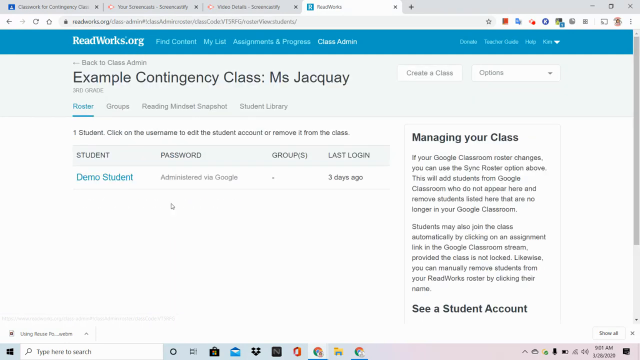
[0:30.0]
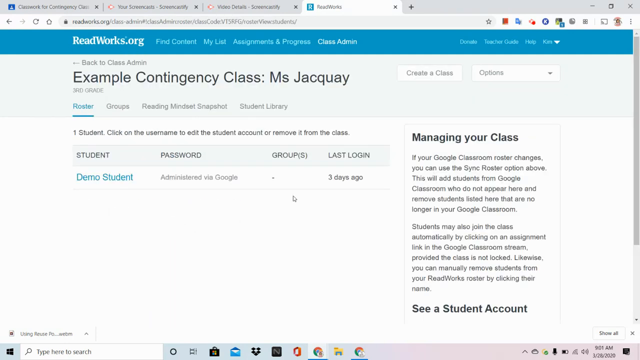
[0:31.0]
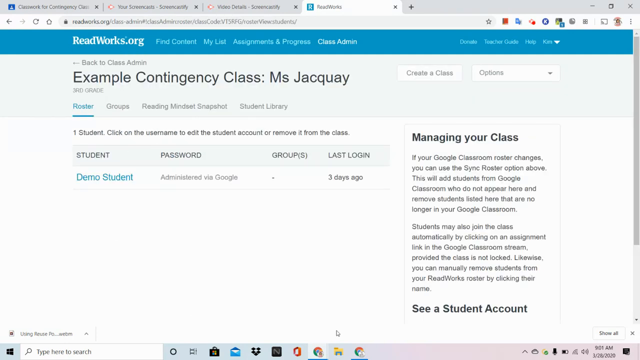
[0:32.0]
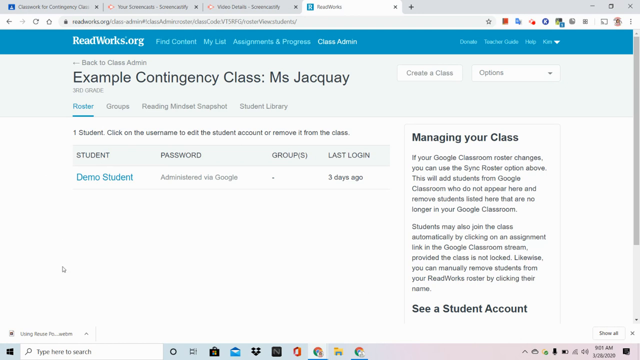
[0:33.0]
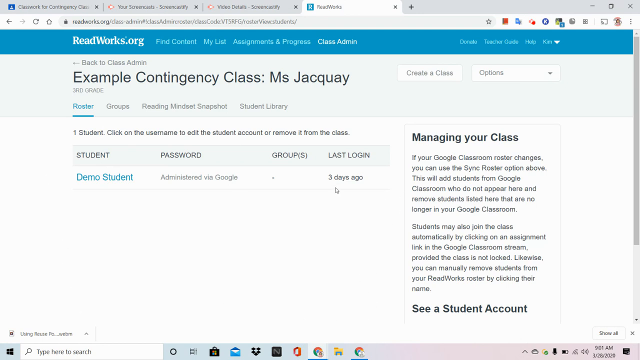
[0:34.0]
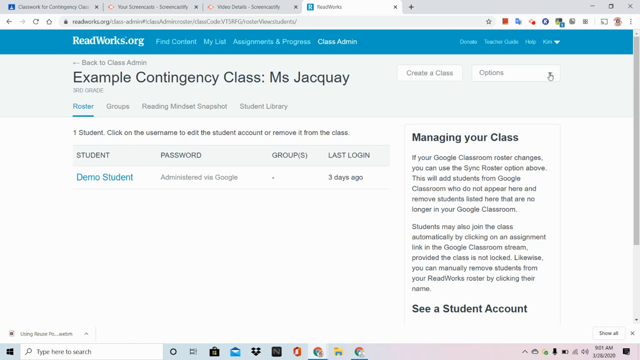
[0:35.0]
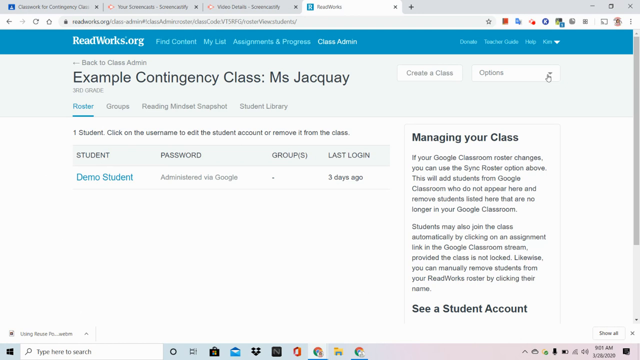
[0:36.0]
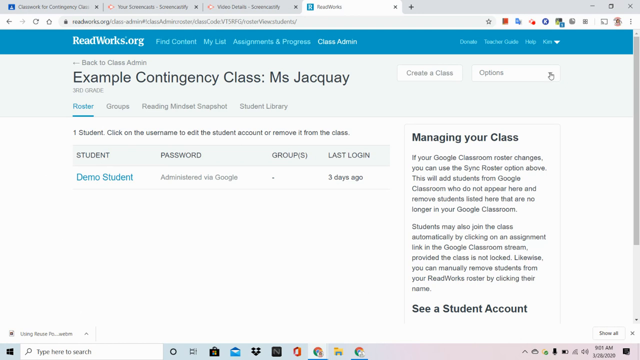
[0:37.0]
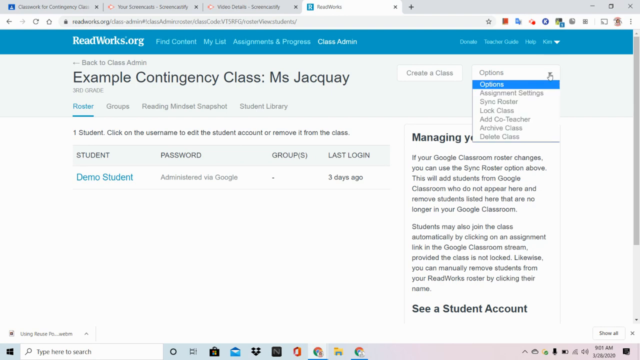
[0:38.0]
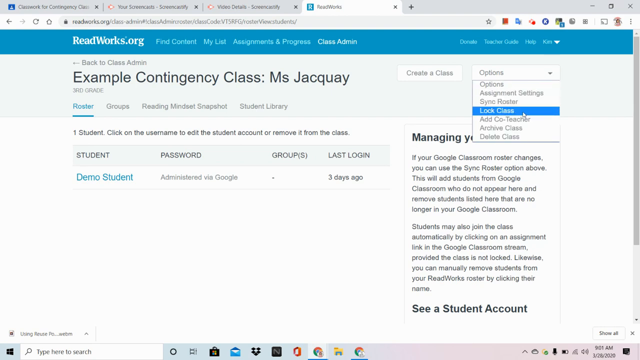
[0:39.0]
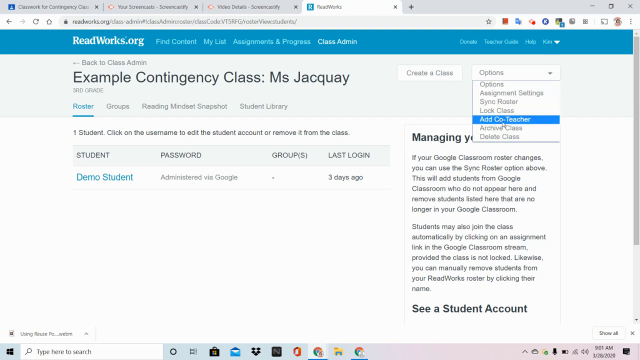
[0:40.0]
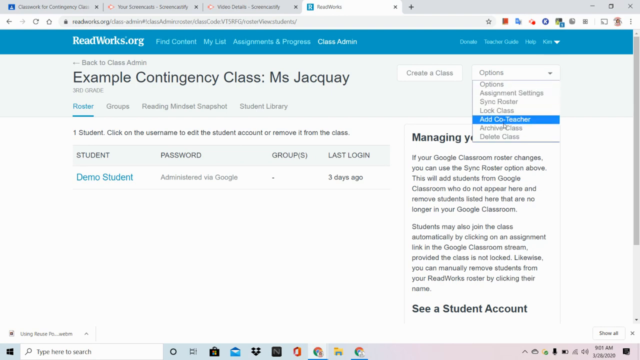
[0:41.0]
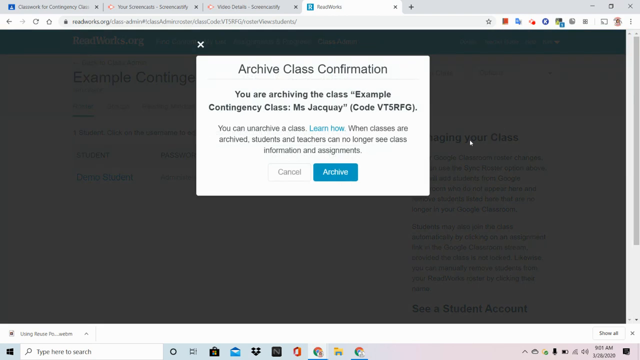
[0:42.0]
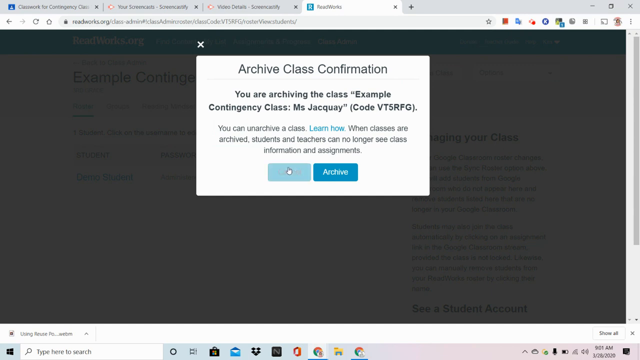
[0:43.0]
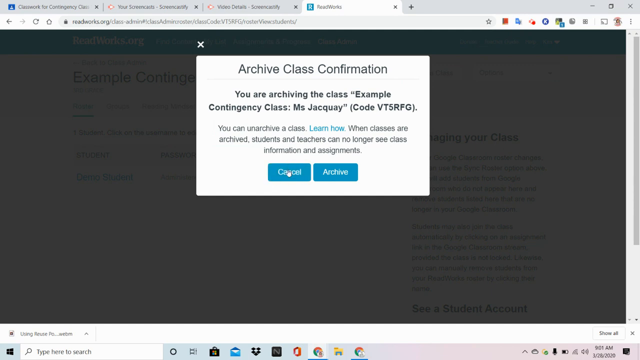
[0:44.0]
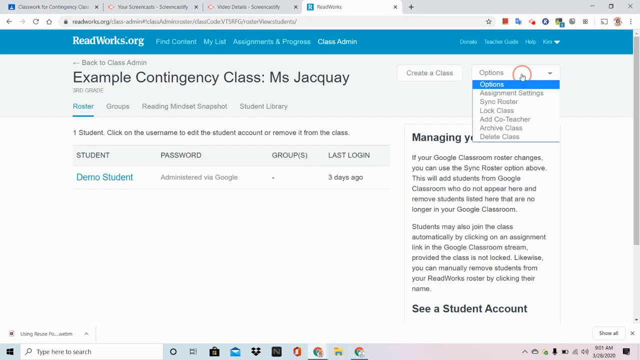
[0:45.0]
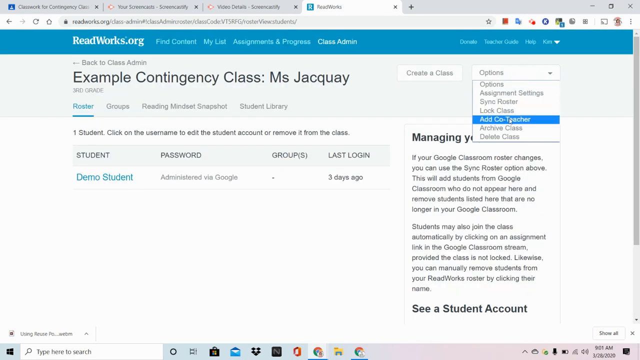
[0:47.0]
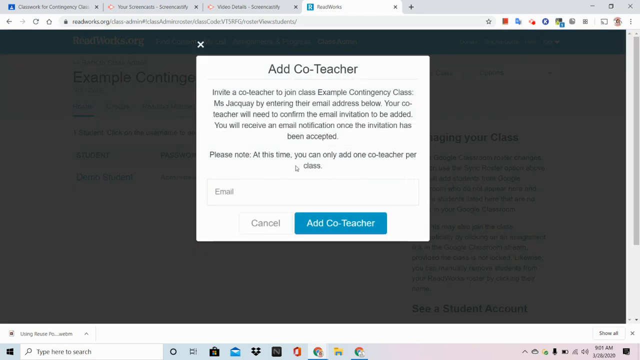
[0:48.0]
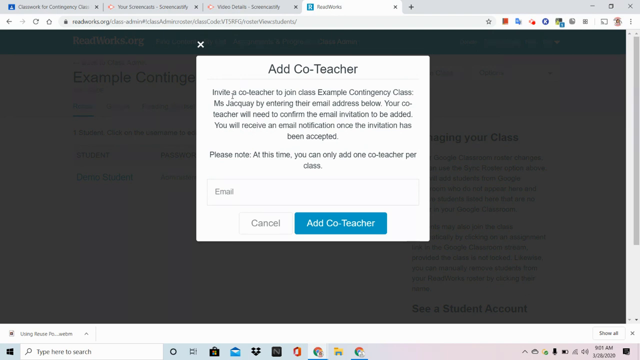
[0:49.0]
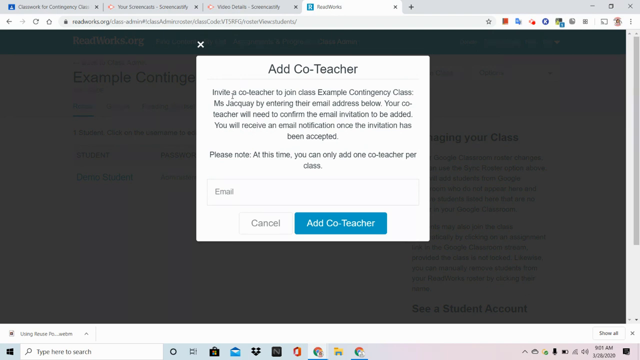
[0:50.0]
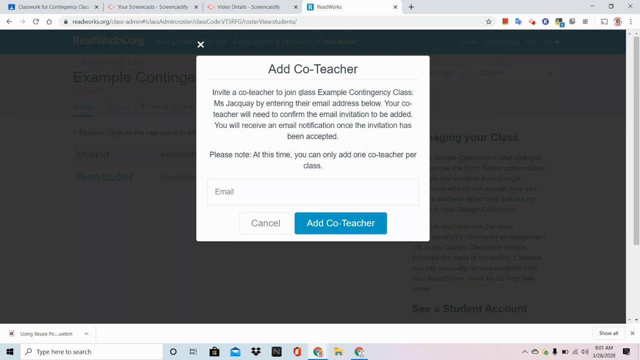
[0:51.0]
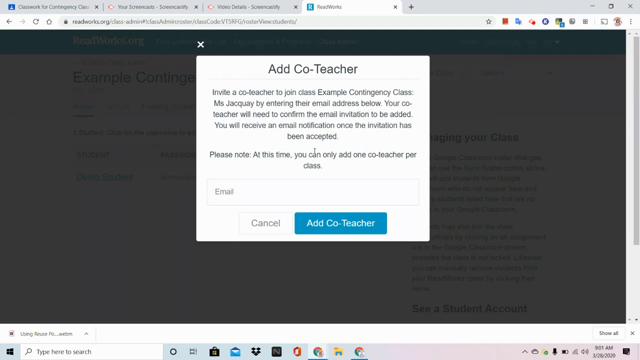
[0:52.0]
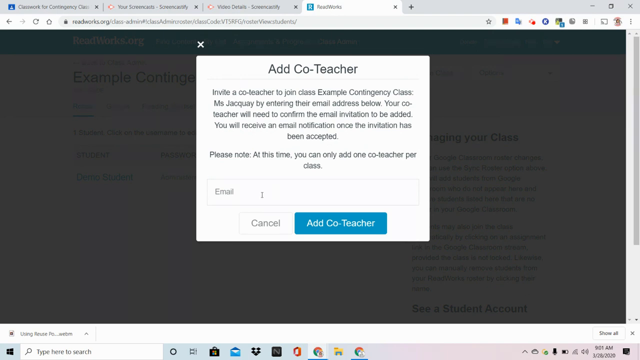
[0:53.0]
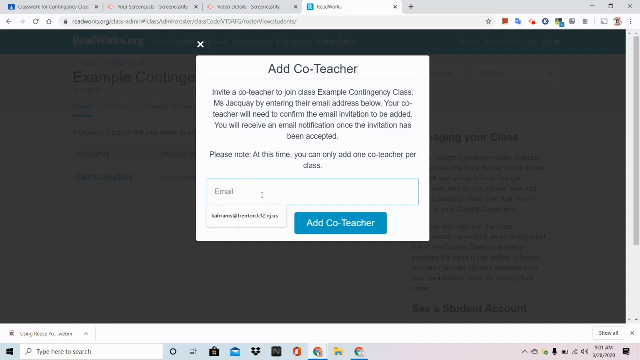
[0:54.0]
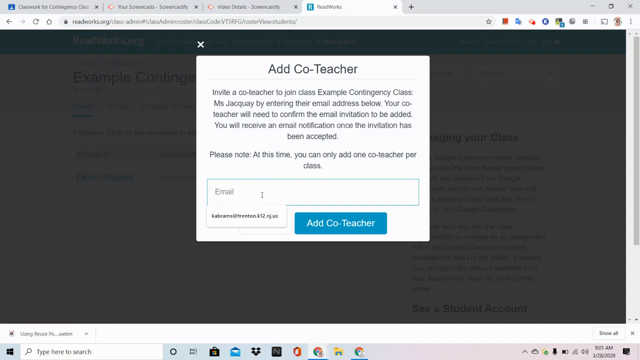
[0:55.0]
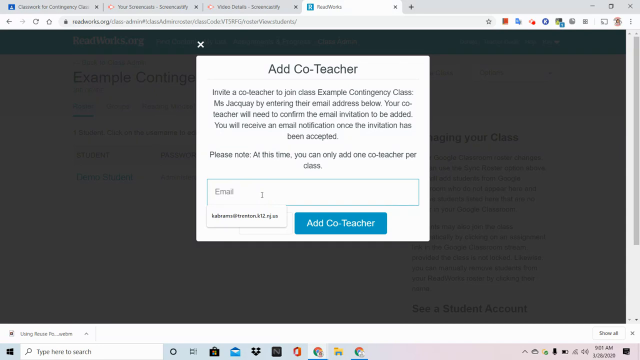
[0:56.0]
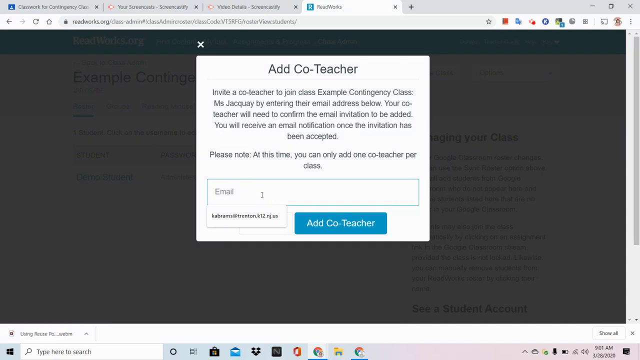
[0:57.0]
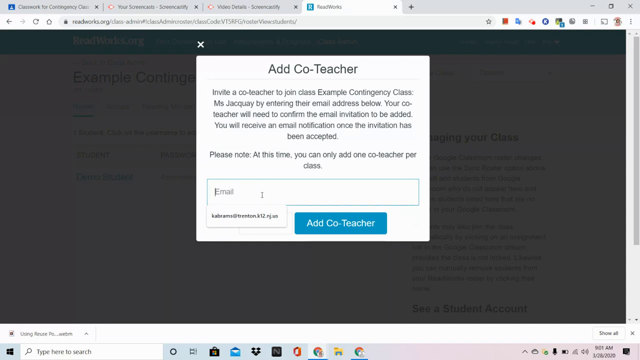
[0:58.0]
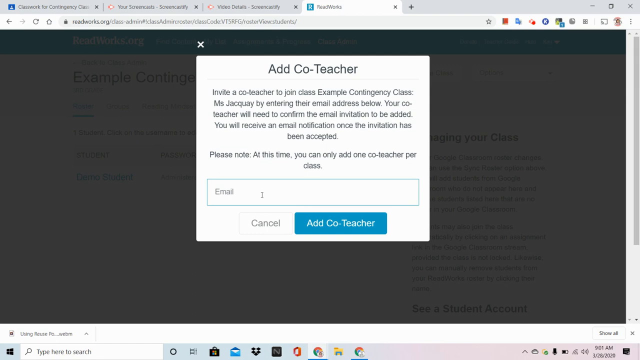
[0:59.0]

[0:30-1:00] The website page shows the "Example Contingency Class: Ms Jacquay". Demo Student is first on the list, with a last login of 3 days ago. The pointer clicks on the options tab and then on "Archive Class Confirmation", and a pop-up appears saying "You are archiving the class: "Example Contingency Class : Ms Jacquay"", along with a code. The pointer presses cancel, clicks the options tab again and clicks on "Add Co Teacher". Another pop-up appears saying "Invite a co teacher to join class Example Contingency Class: Ms Jacquay by entering their email address below. Your co teacher will need to confirm the email invitation to be added." The pop-up also has a slot to input an email address.